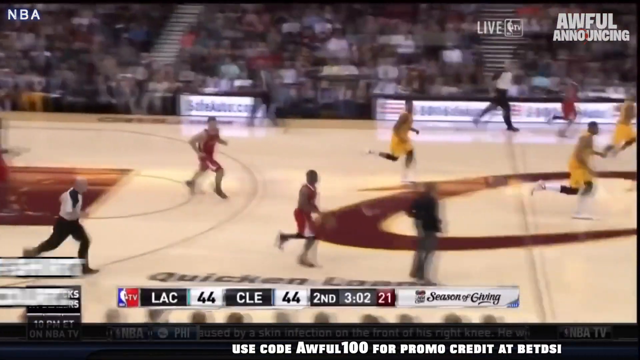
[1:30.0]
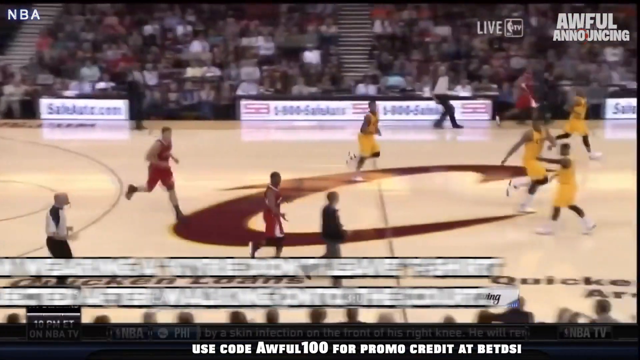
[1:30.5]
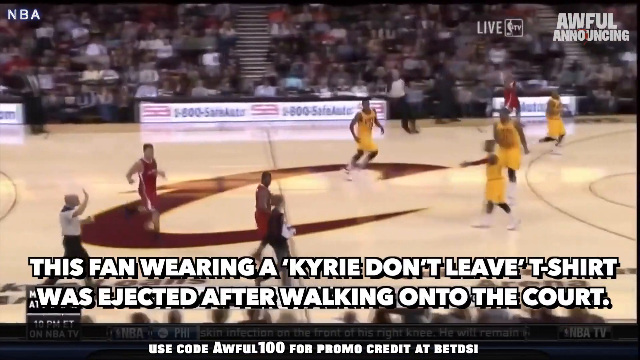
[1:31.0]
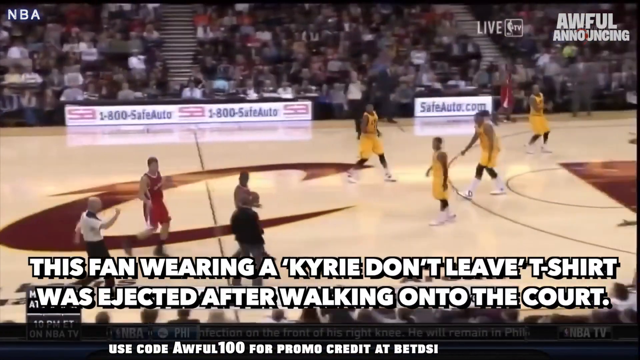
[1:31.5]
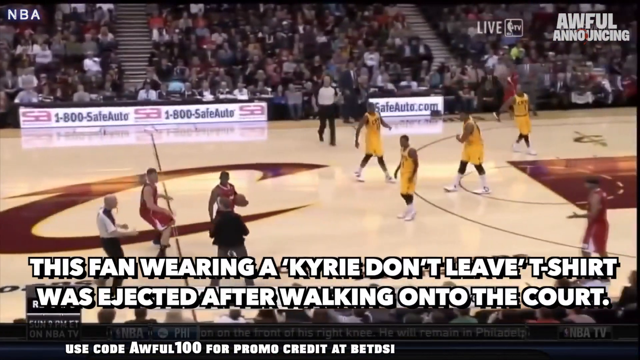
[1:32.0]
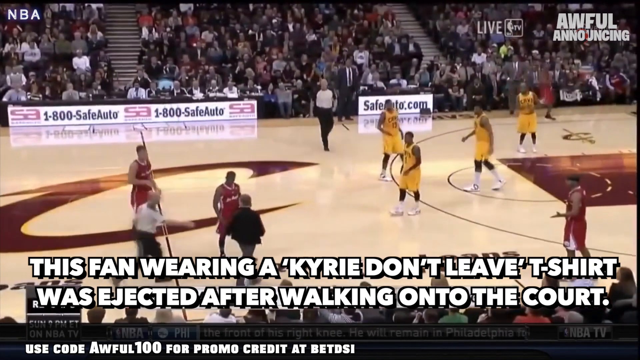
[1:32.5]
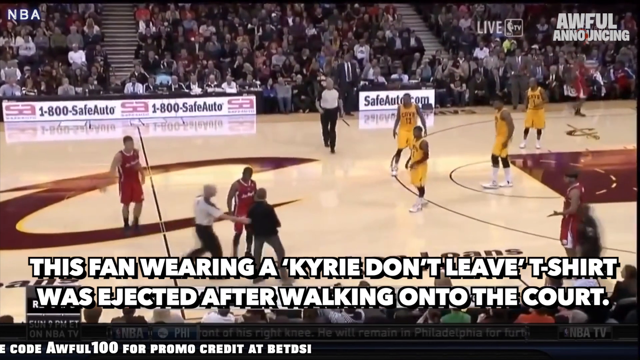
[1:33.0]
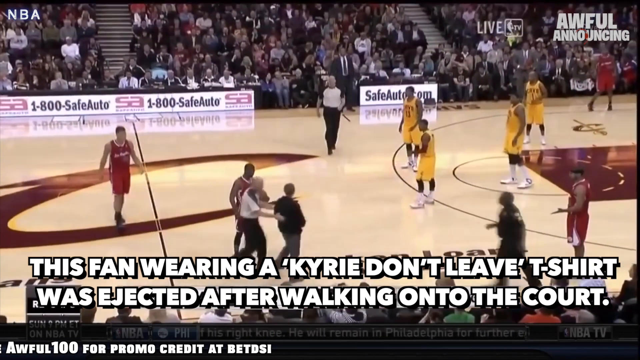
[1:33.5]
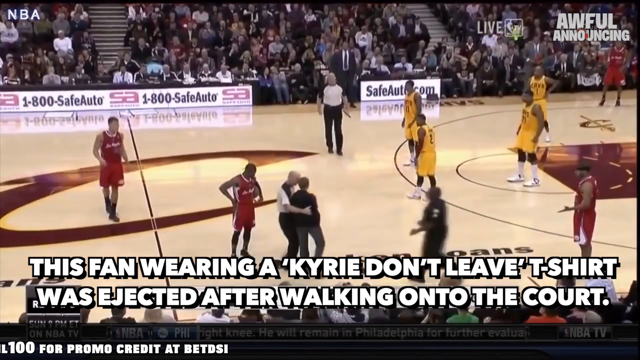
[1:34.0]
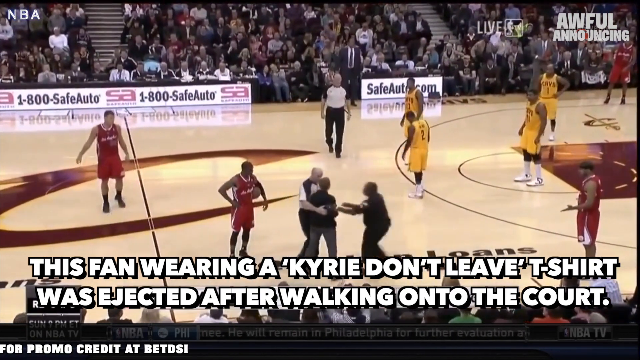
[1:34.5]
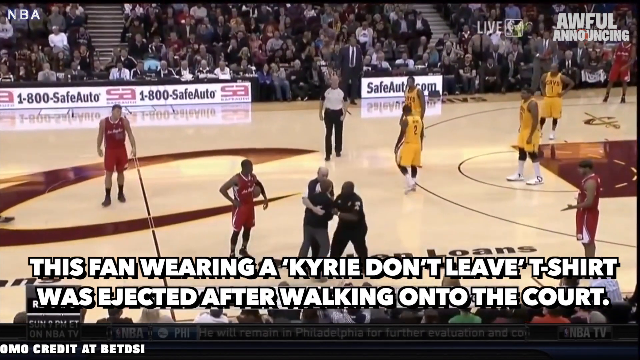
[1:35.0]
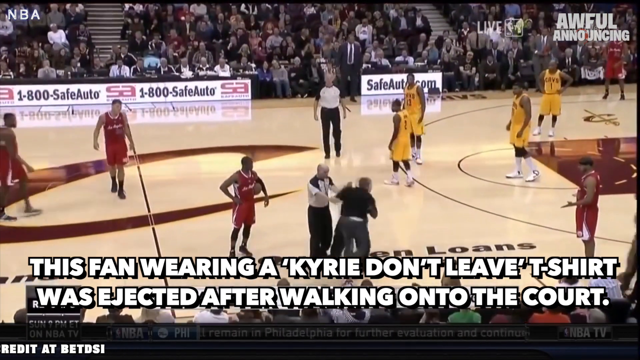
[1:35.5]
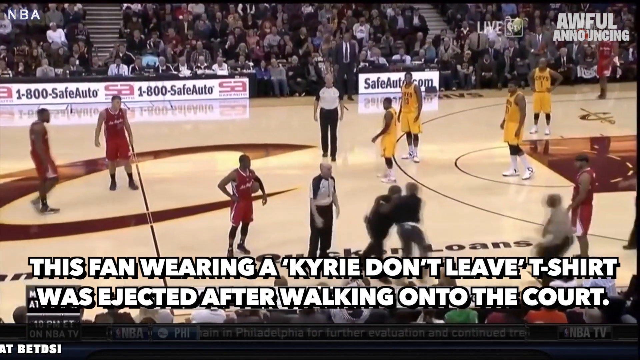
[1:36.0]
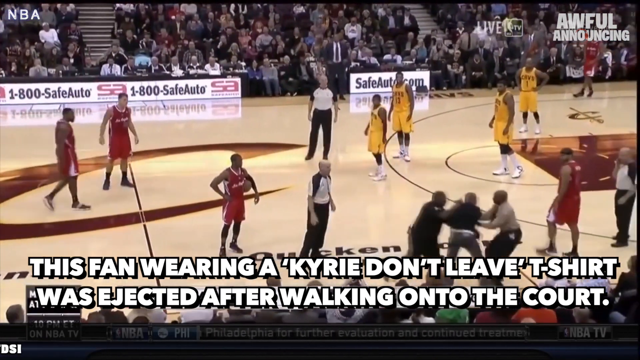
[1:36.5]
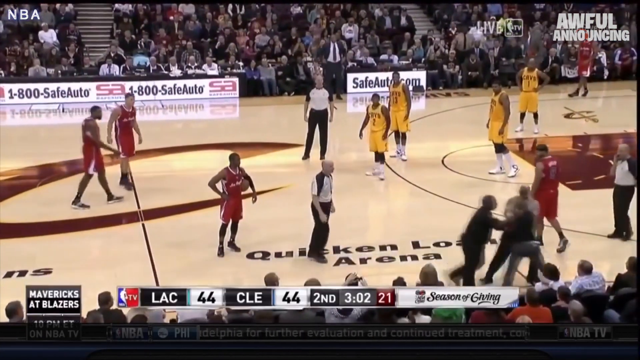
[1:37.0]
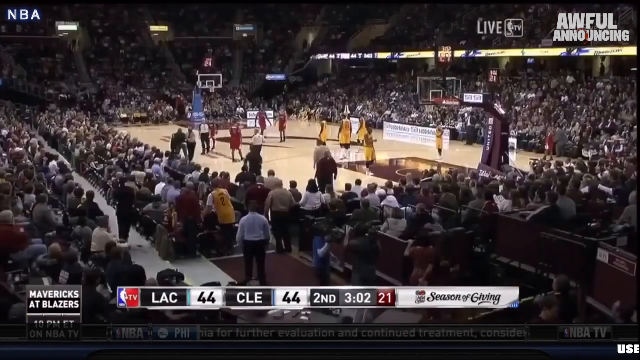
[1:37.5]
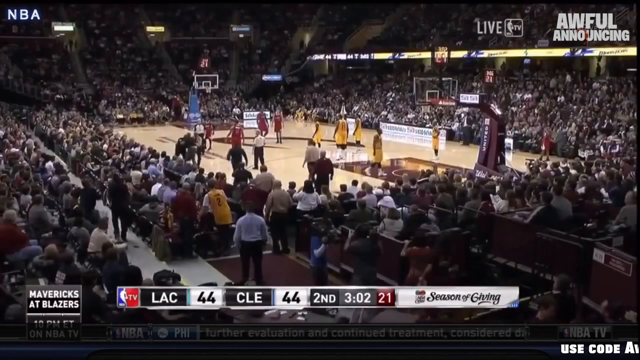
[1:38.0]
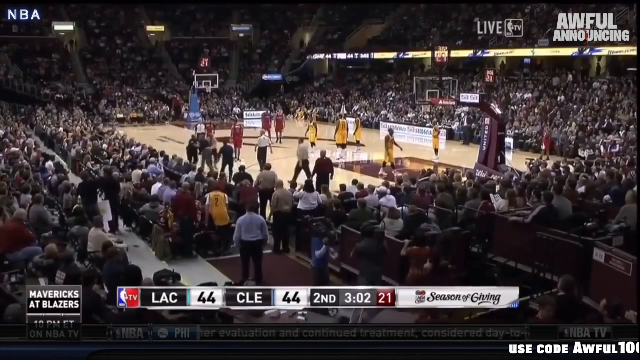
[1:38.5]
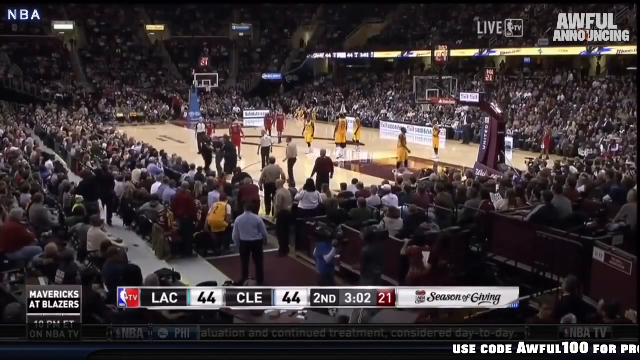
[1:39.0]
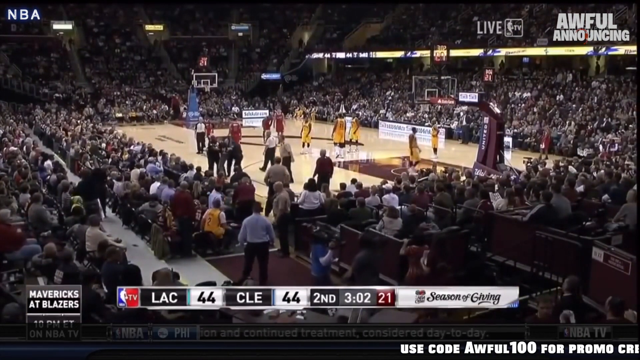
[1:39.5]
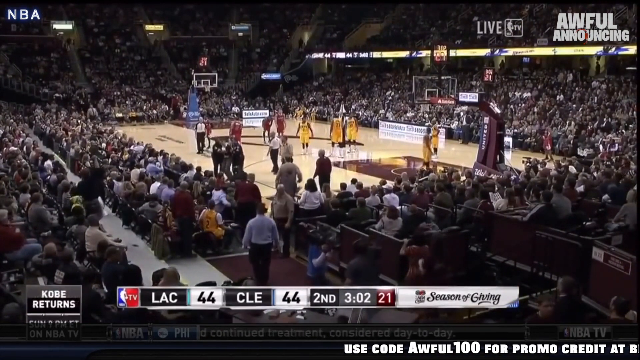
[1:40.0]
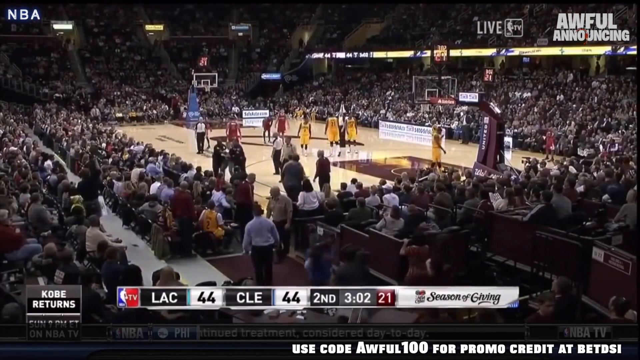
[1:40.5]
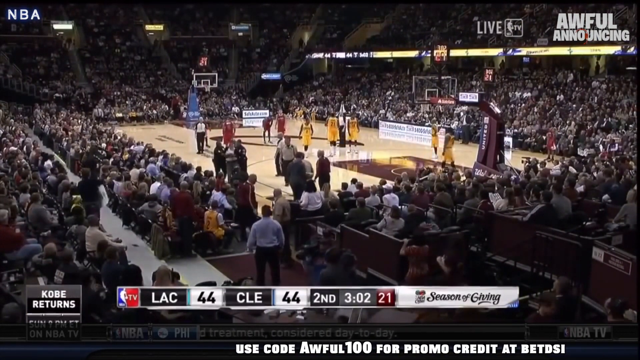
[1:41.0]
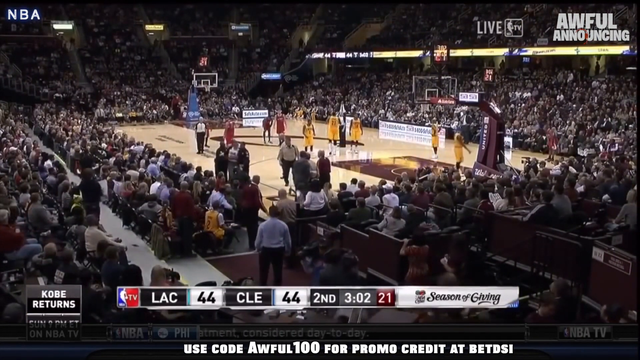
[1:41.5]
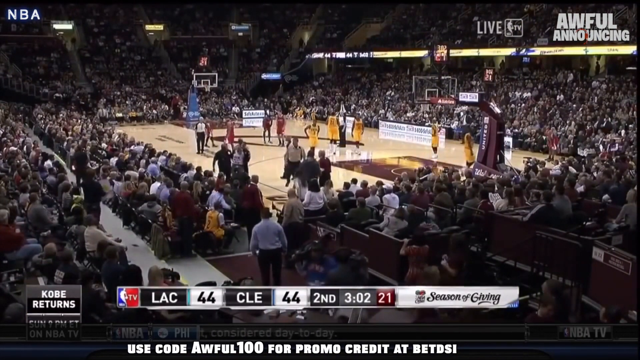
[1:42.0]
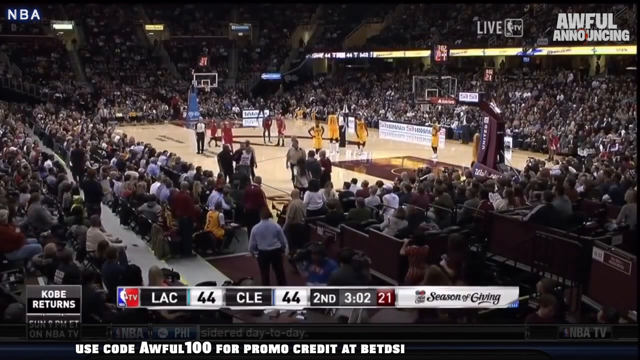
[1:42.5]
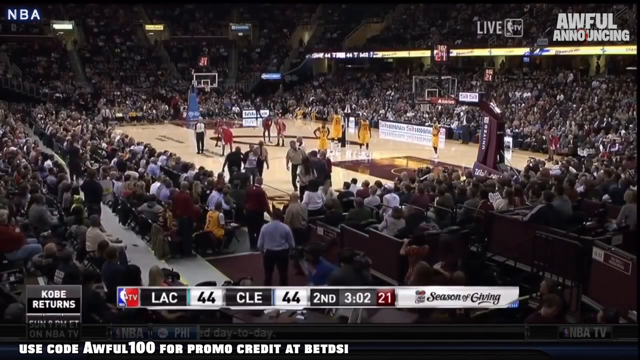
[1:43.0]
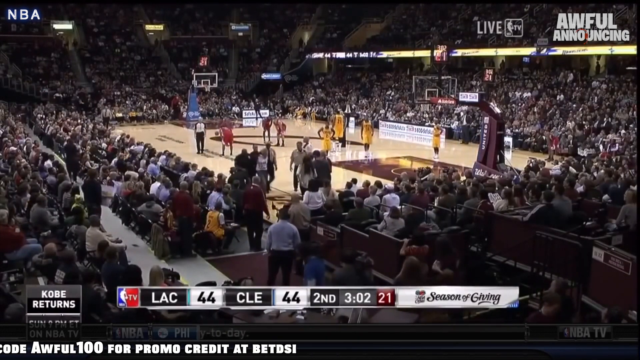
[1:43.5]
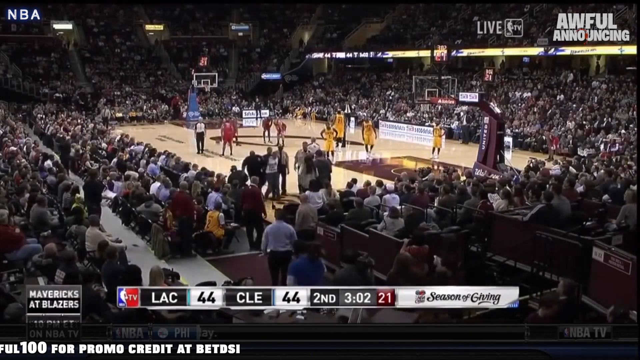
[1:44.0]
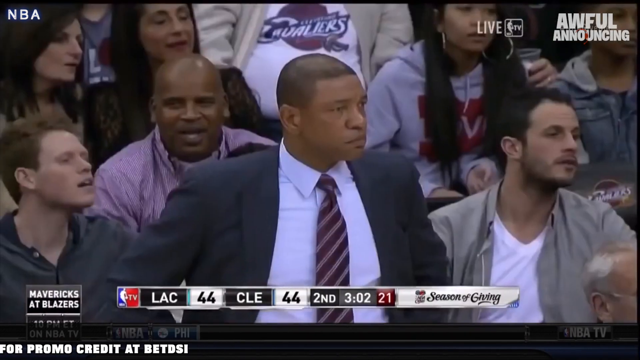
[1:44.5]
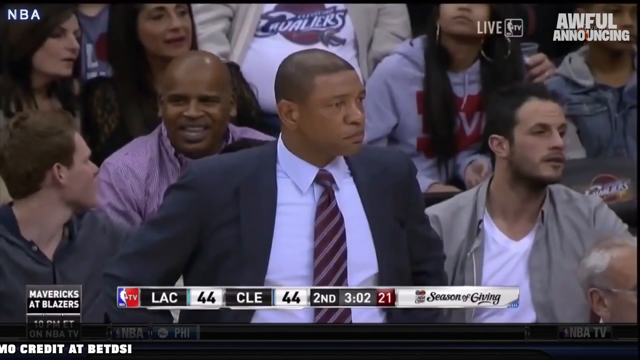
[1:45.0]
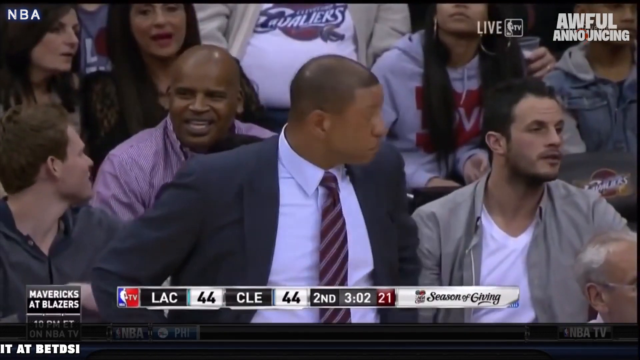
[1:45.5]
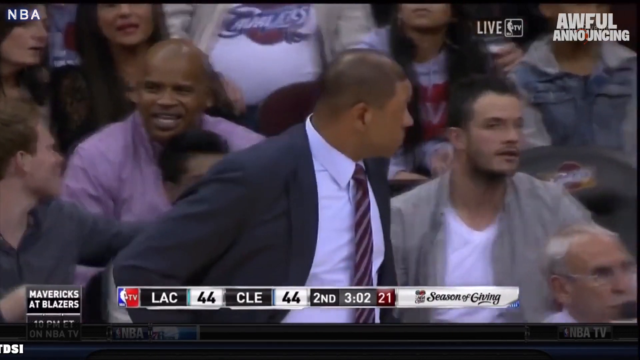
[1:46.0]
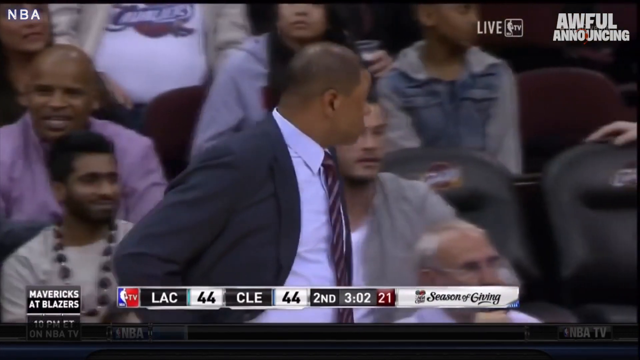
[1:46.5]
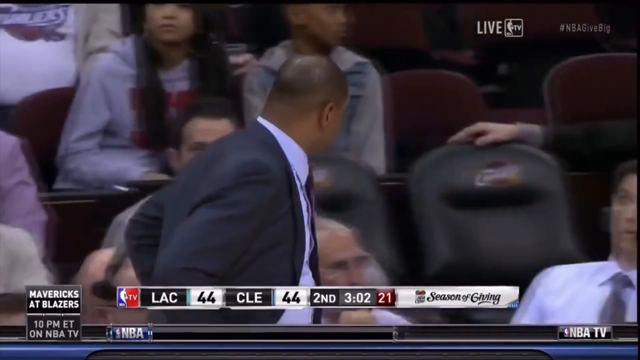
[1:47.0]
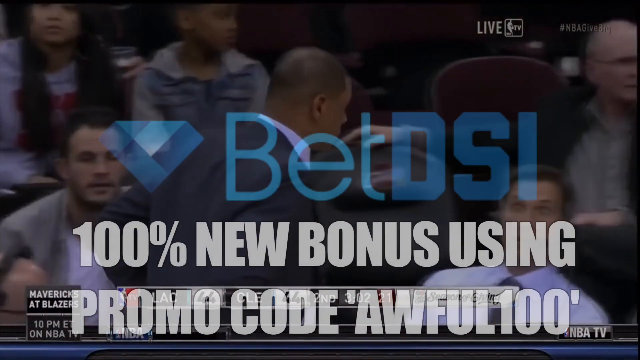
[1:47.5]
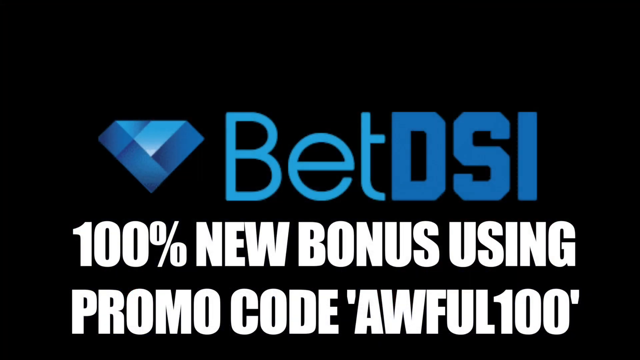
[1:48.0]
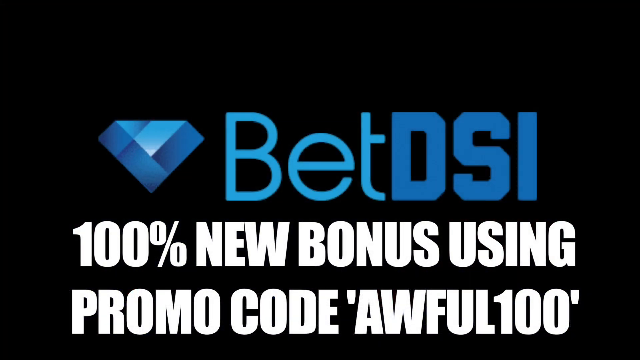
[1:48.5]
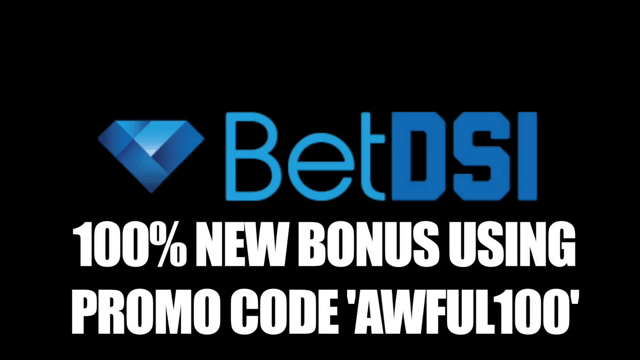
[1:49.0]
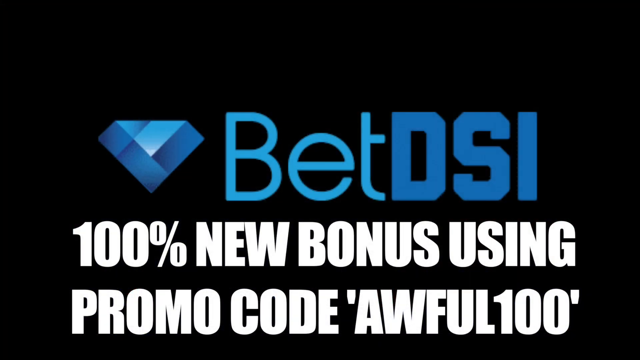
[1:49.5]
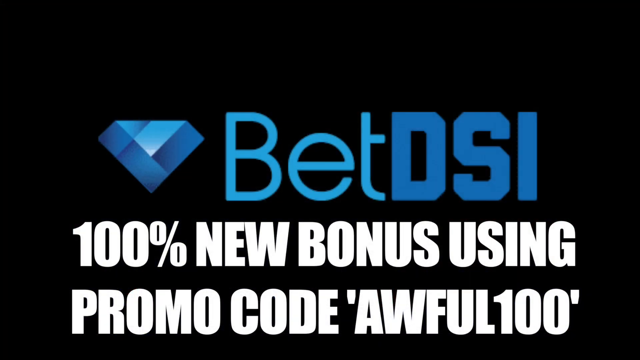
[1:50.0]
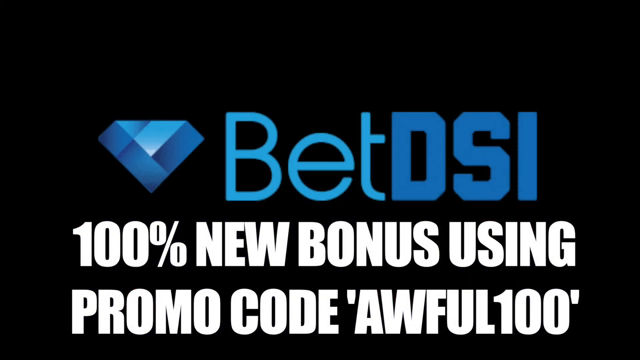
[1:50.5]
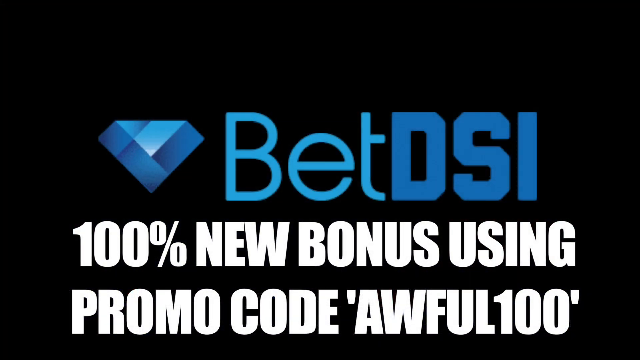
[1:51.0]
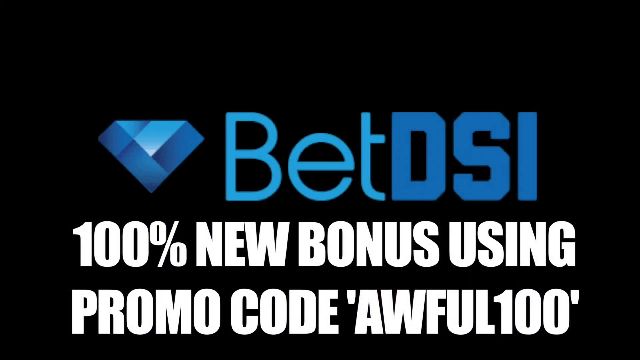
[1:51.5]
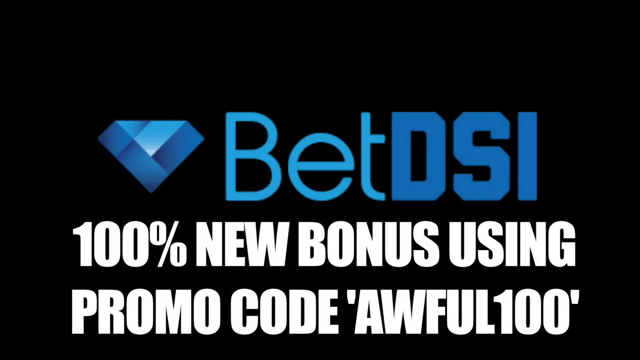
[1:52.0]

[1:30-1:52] Another basketball game is played between two NBA teams, one in burgundy and white and the other in yellow and burgundy. Text at the bottom center of the screen reads "this fan wearing a Kyrie don't leave t-shirt was ejected after walking onto the court." A man walks onto the court and is escorted by a couple of men who are apparently security officers. The scoreboard at the bottom center of the screen reads "LAC 44, CLE 44." Several people in the stands are then shown, including a man in a suit and tie who is apparently a coach for one of the teams. The video ends on a solid black background with the words "Bet DCI" in blue in the middle of the screen, a blue diamond logo next to them, and beneath that, "100% new bonus using promo code AWFUL100."